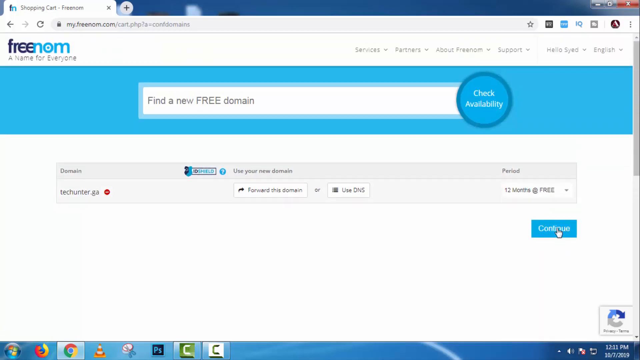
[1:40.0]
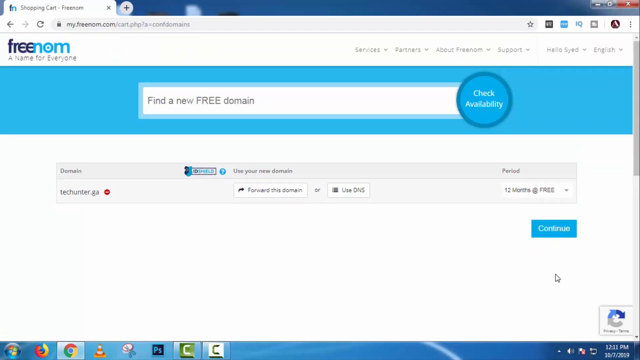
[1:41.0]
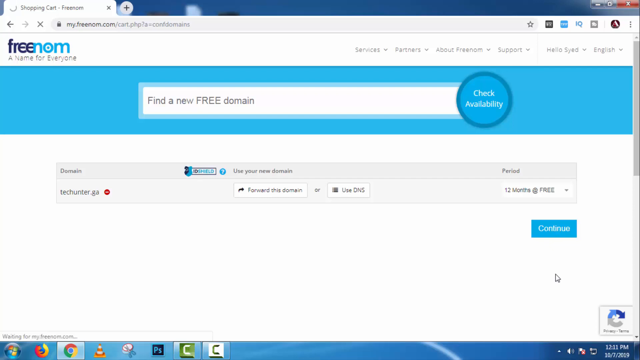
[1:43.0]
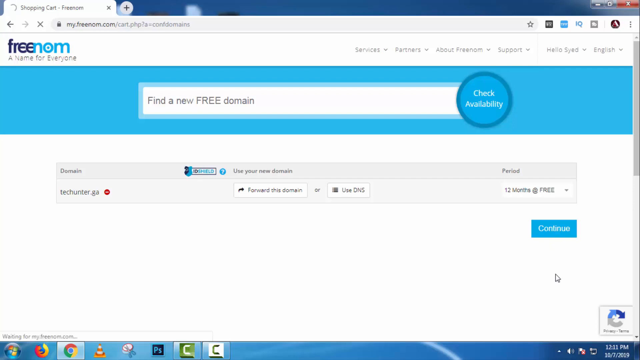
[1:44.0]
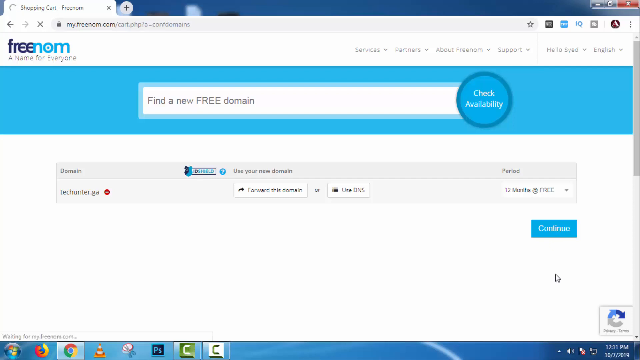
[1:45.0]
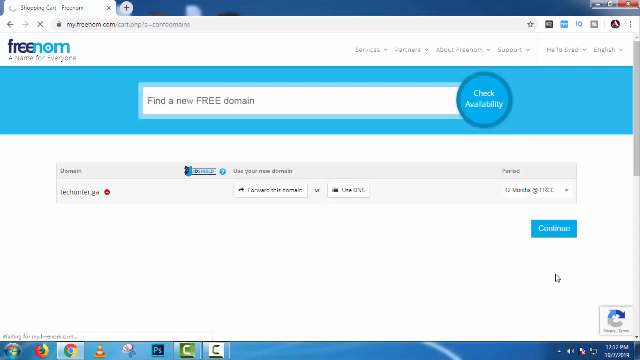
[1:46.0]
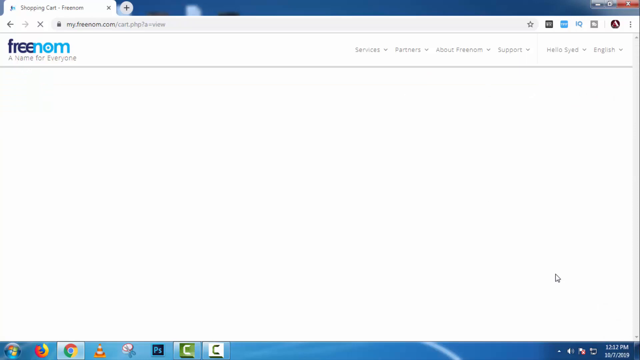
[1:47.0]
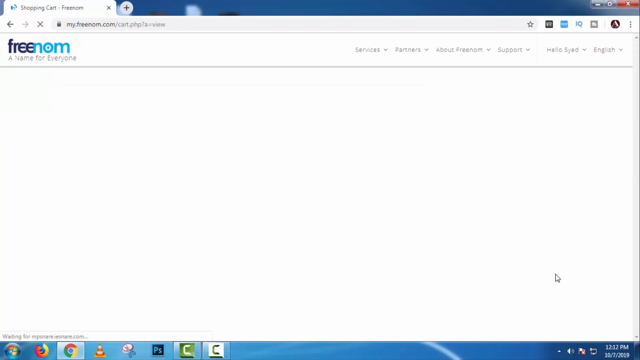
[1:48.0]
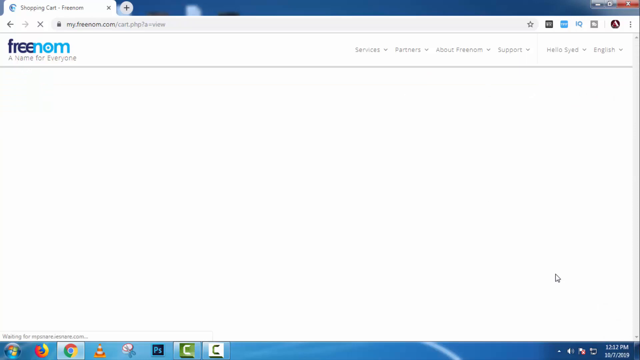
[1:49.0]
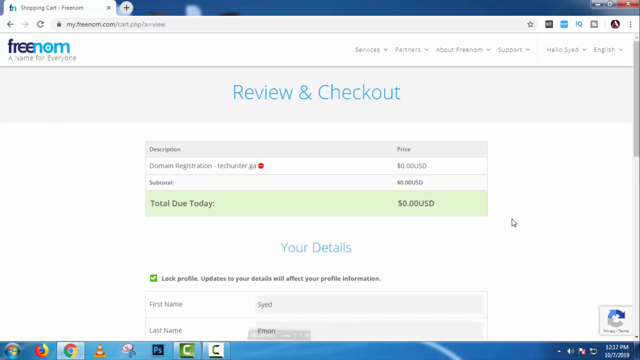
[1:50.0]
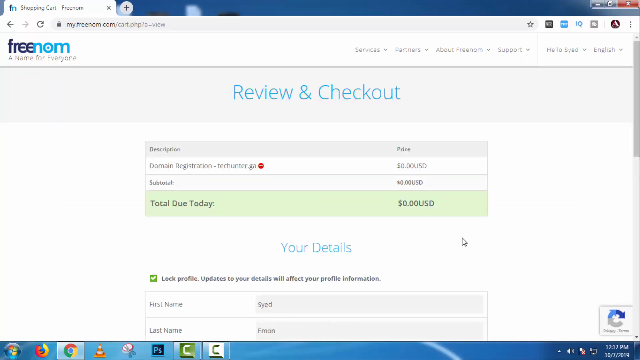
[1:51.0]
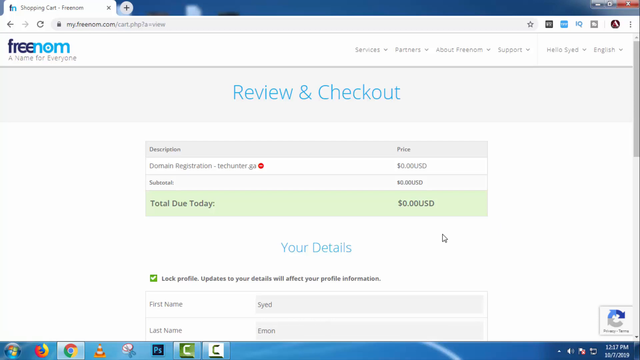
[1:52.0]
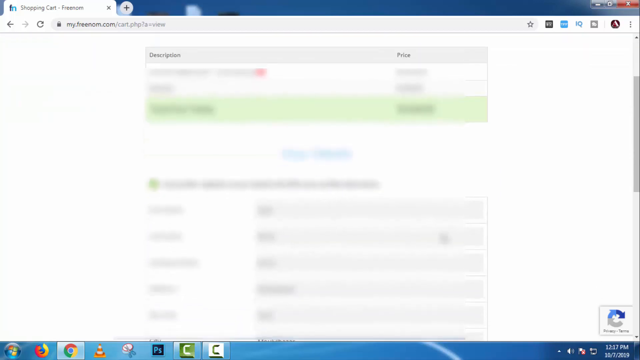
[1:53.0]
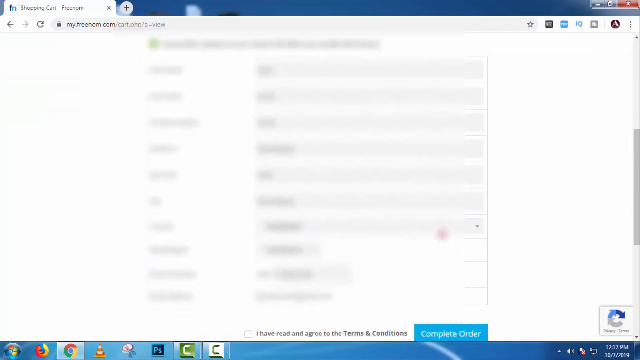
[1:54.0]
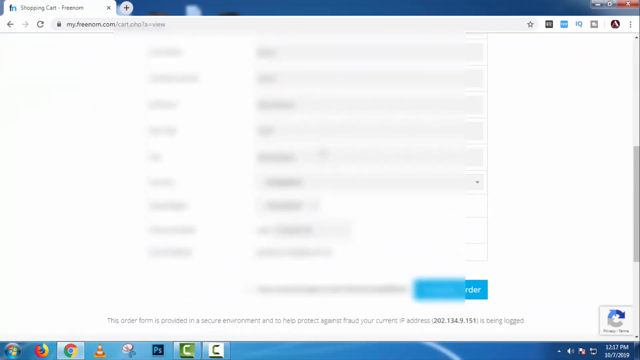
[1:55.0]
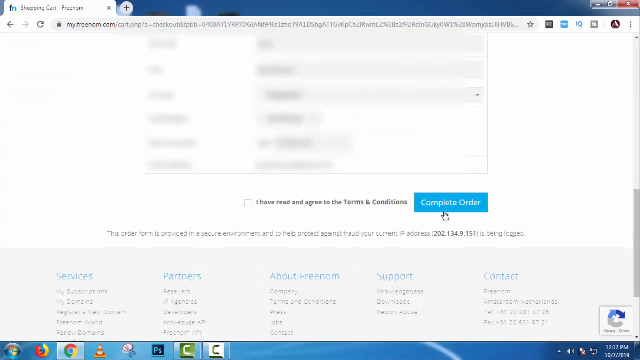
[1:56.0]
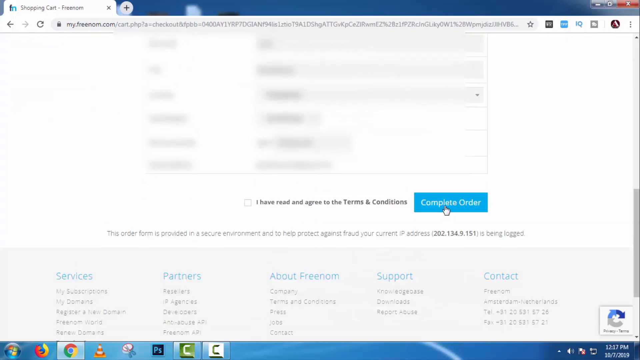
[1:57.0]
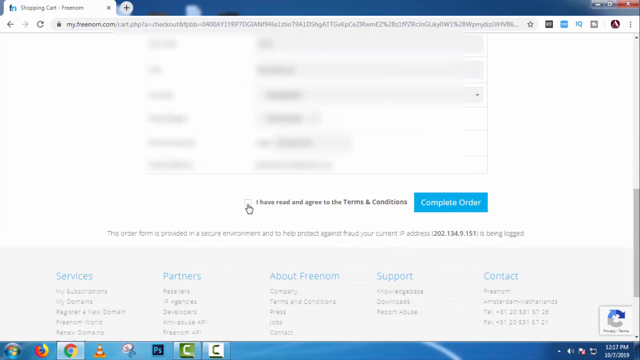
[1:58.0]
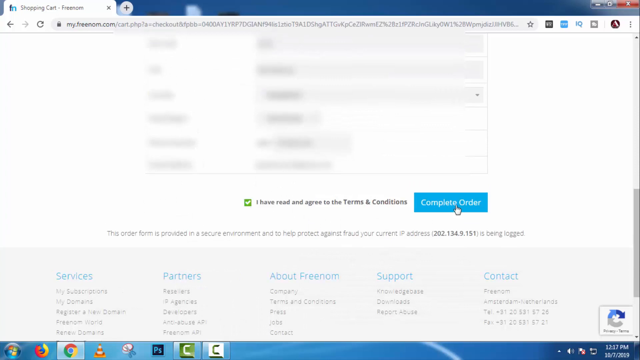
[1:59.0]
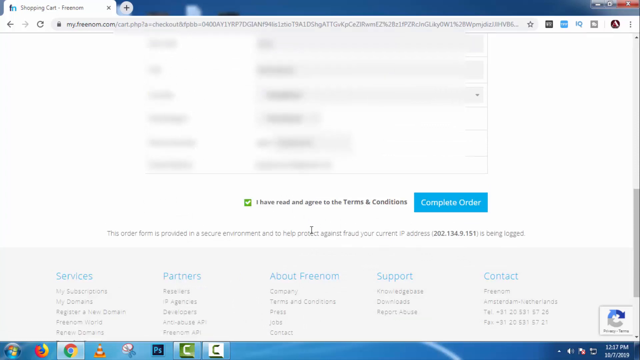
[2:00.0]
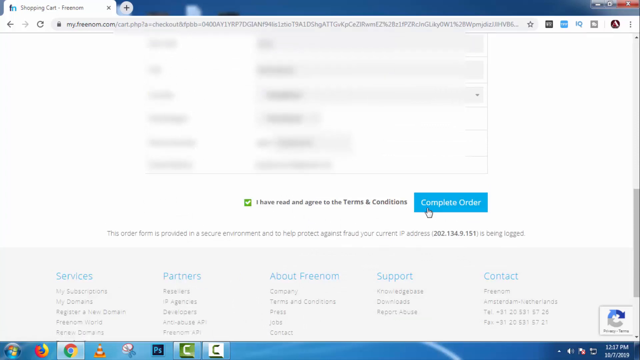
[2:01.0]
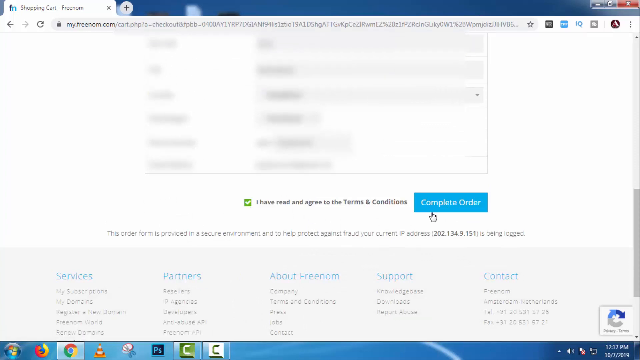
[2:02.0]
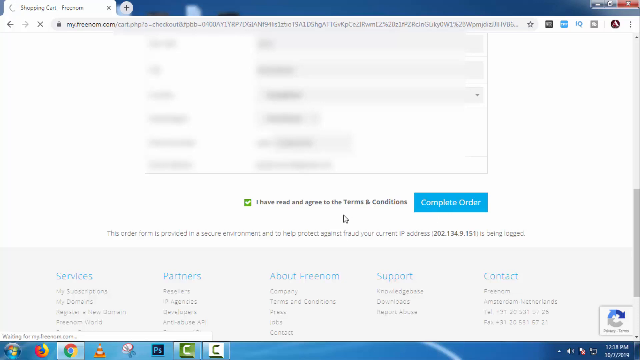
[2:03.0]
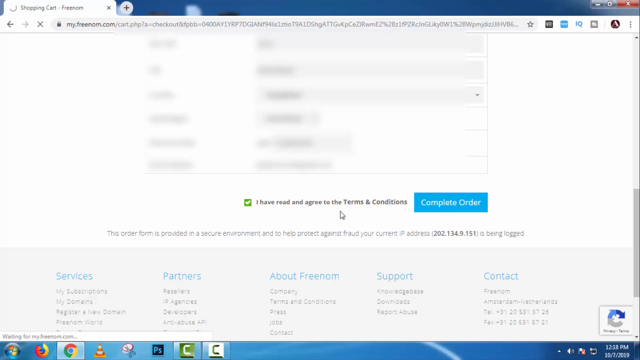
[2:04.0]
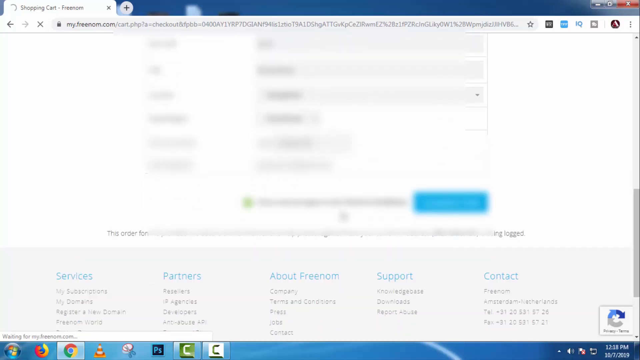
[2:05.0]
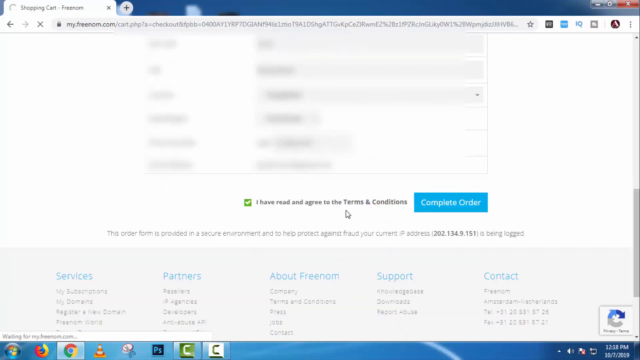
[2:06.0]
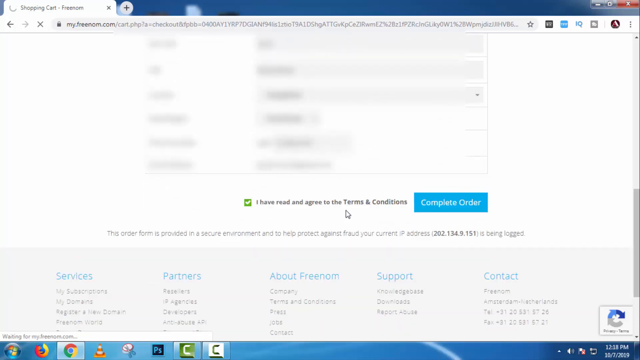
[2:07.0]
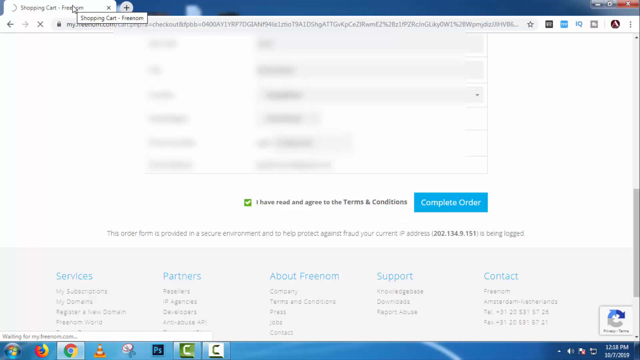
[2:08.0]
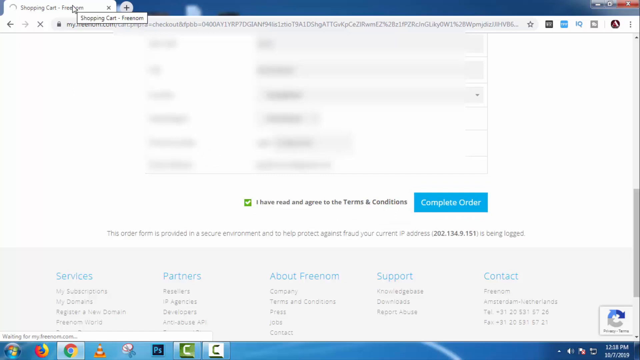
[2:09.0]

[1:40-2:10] After the Continue button is clicked, another blank white screen of the website appears, then a new window titled "Review and Checkout" in thin script. Underneath are four rows: the top one gray, the middle ones white, and the bottom one reading "total due today" with "00USD" on the right; the two or three lines above it hold more text on the left and right. Below that is "your details," seemingly where a name and personal details can be entered. In the lower right is a blue button reading "complete order," with a little green check mark indicating agreement to the terms and conditions. Right before the order confirmation page, the bottom of the website shows sections titled "services," "partners," "about freedom," "support" and "contact," each with five or six lines of black text below it.